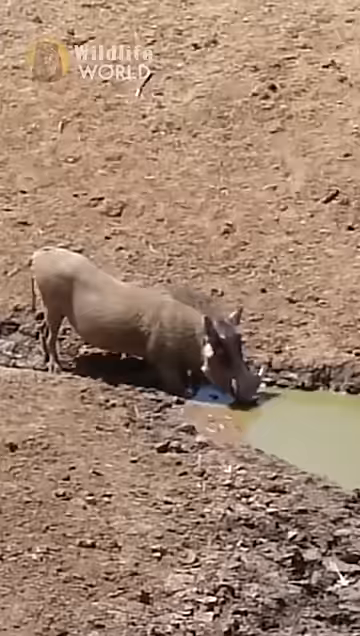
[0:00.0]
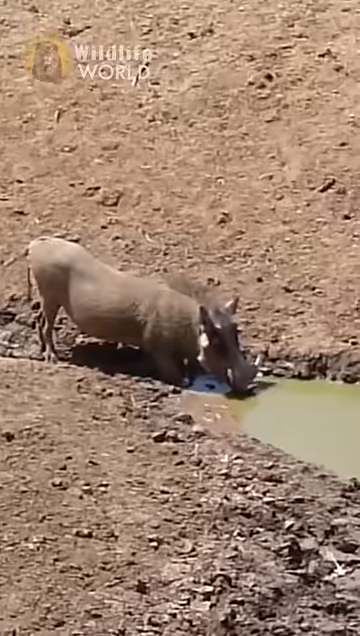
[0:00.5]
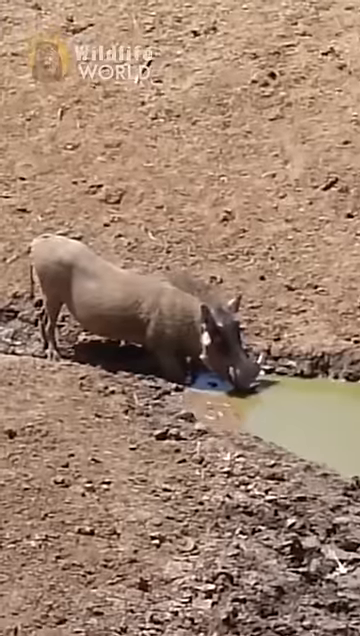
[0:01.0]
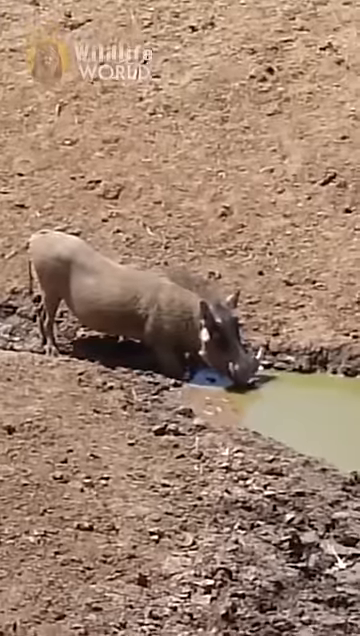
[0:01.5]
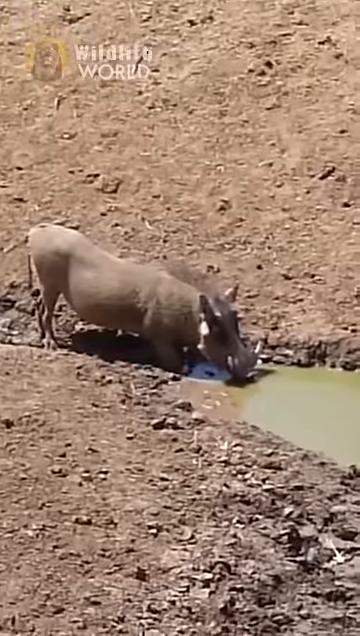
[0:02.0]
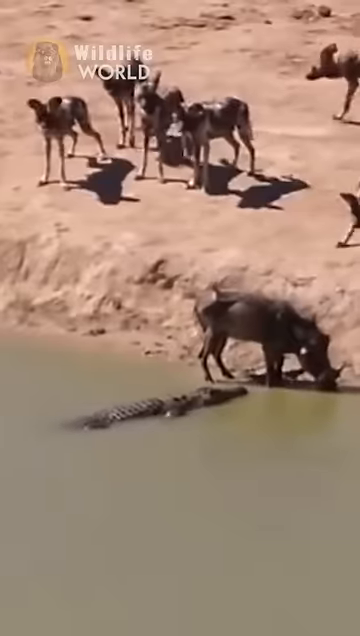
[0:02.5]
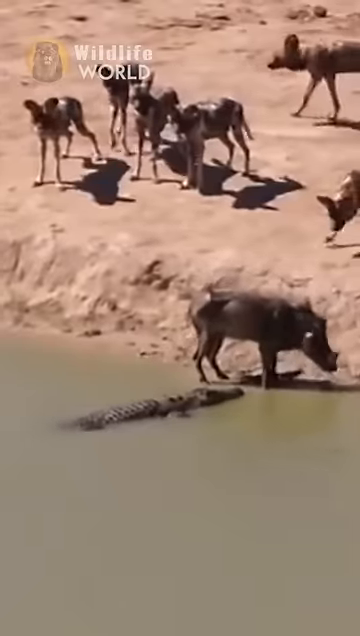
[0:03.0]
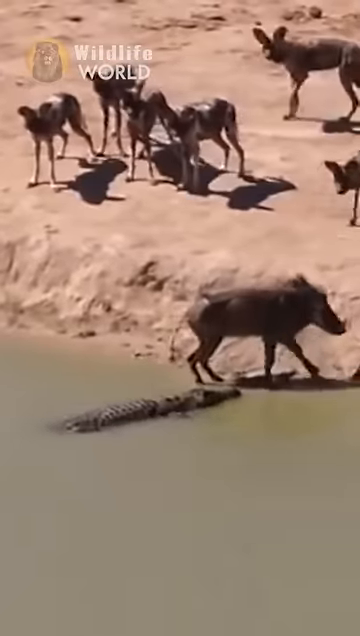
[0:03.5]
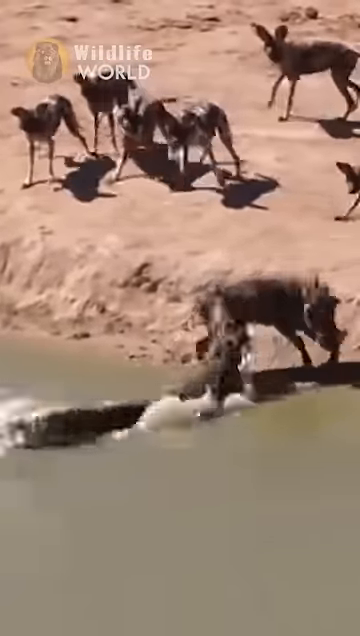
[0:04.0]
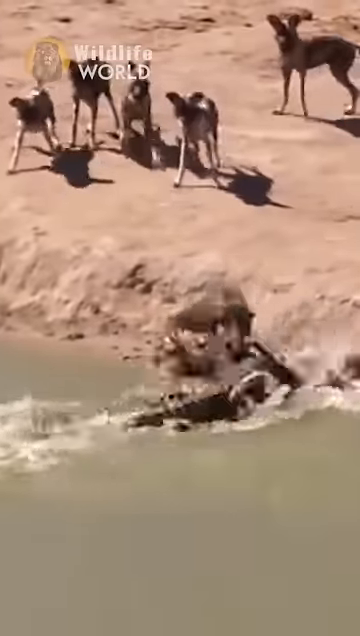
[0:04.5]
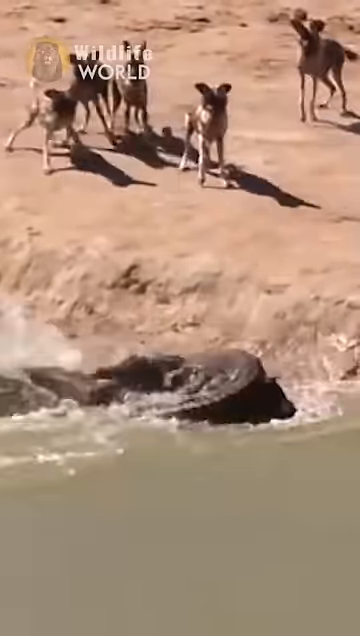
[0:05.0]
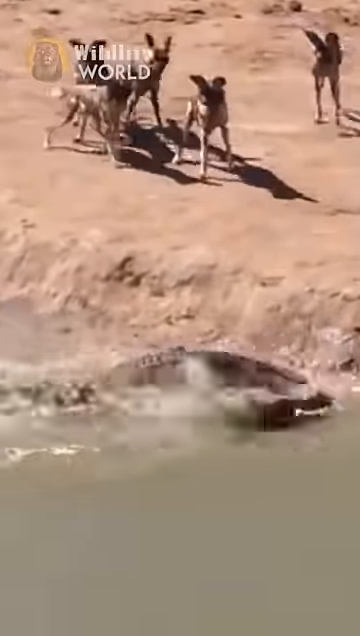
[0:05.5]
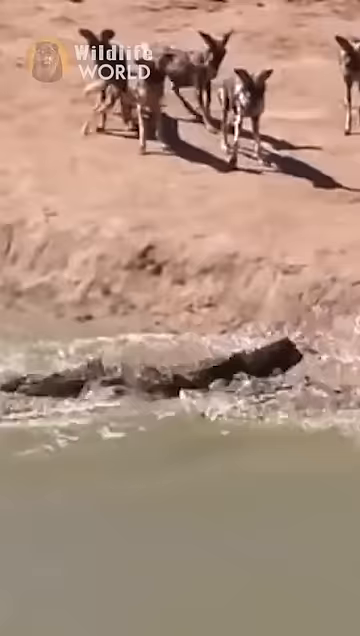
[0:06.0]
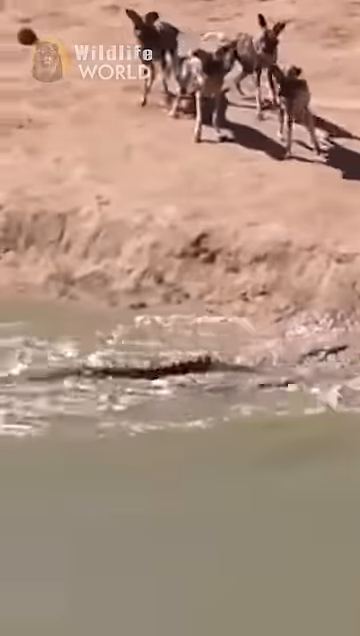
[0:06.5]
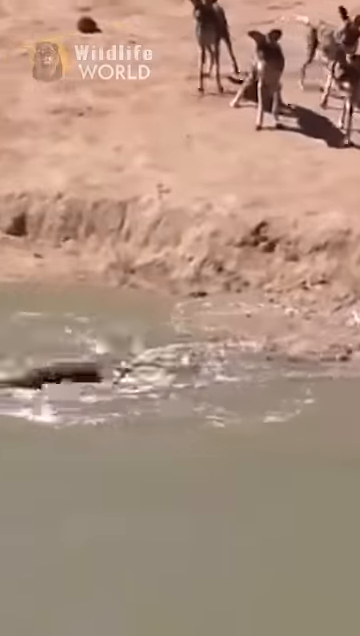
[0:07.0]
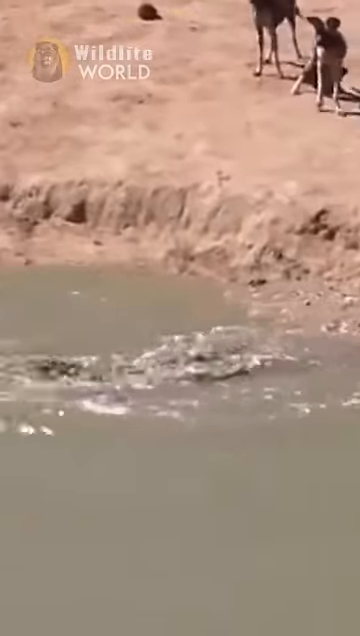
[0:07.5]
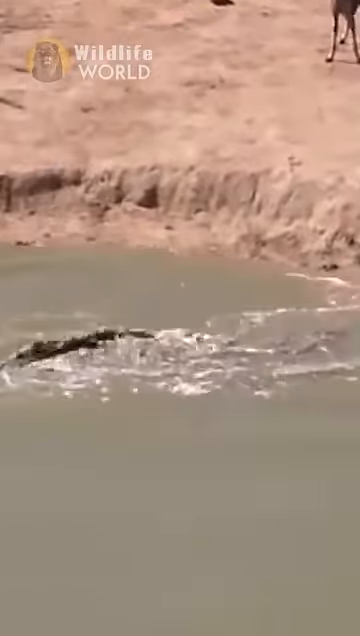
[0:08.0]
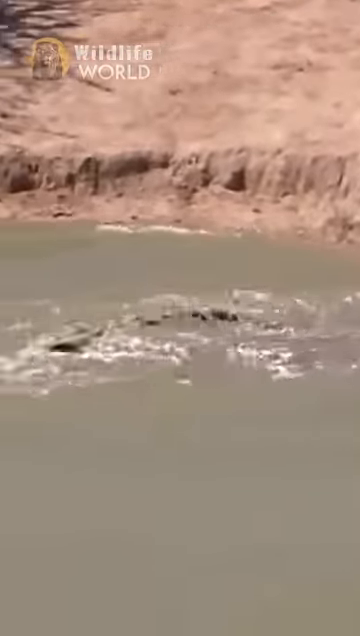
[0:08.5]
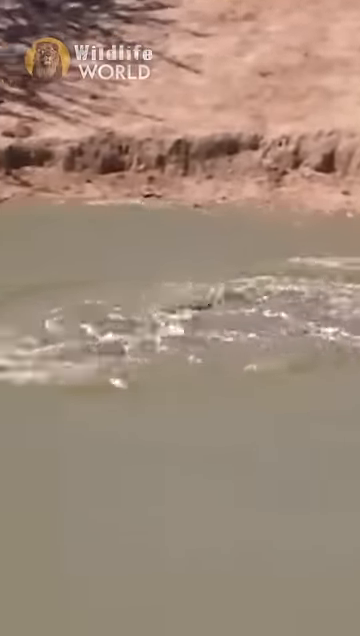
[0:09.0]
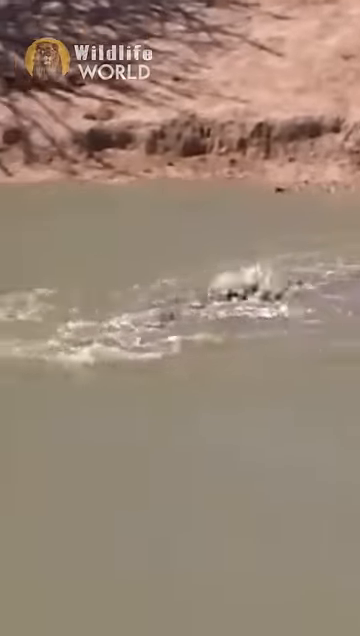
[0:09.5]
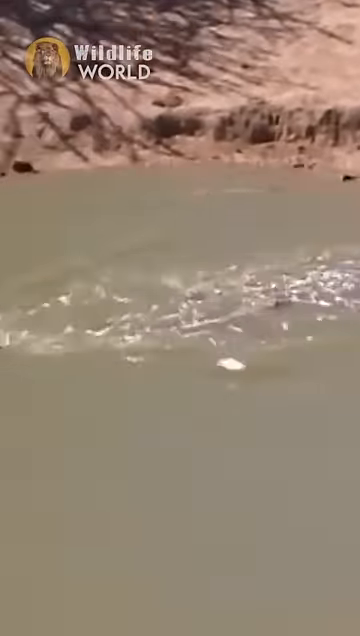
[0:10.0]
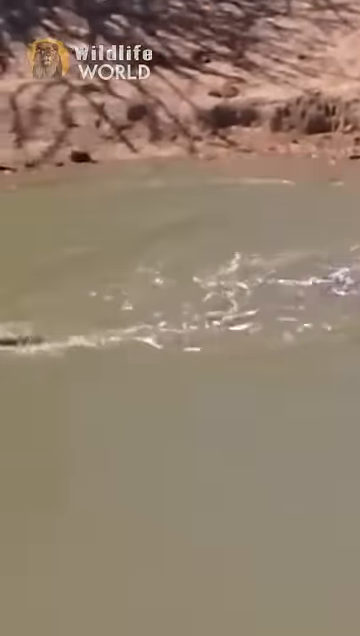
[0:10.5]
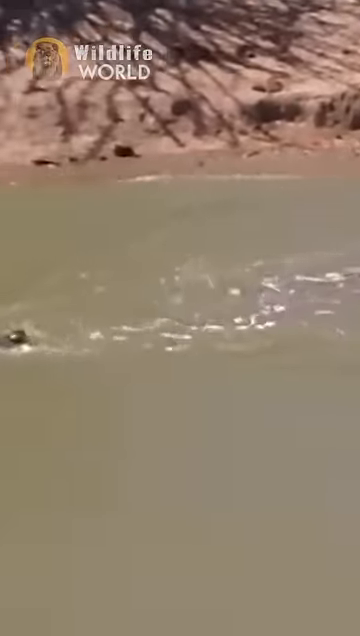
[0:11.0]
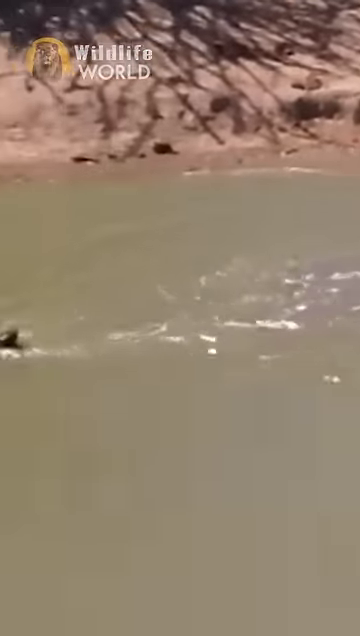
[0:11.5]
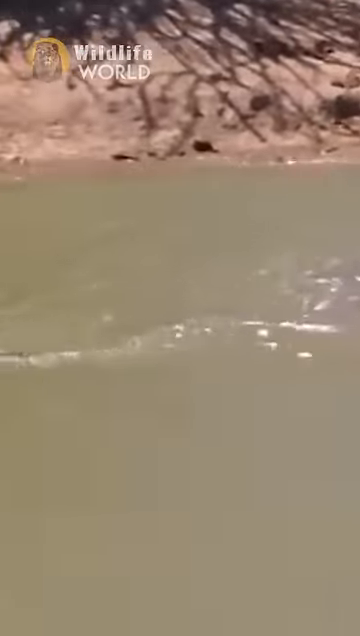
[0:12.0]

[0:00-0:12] The video opens with a single shot of a warthog drinking from a source of water. A second shot shows a group of at least five to ten other animals watching the warthog; they appear to be hyenas, with long ears and a very dog-like look, though it is hard to tell. After the warthog finishes drinking, something in the water that does not fully reveal itself starts to walk towards the land, and it is revealed to be a crocodile. The crocodile quickly comes up, snatches the warthog by the stomach as the warthog struggles, and drags it into the water. Neither the warthog nor the crocodile is really seen after that, but bubbles come up from where the crocodile is, probably from the animal struggling. A graphic of what appears to be a lion has a yellow circle around it, with words next to it. In the bottom right-hand side of the screen there is a red play button surrounded by a white box, which is surrounded by a bigger red box, and in that box the word "subscribe" is right next to the play button.